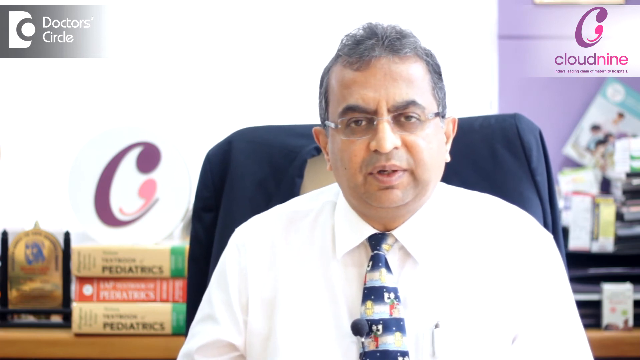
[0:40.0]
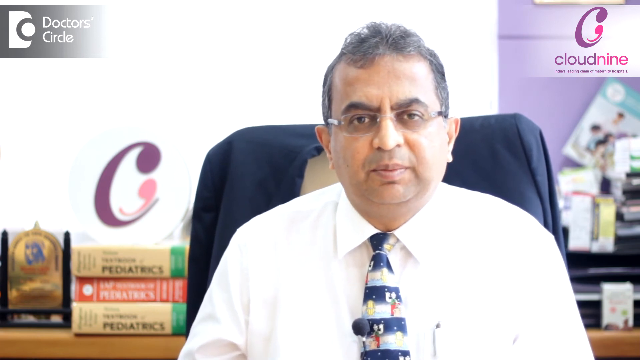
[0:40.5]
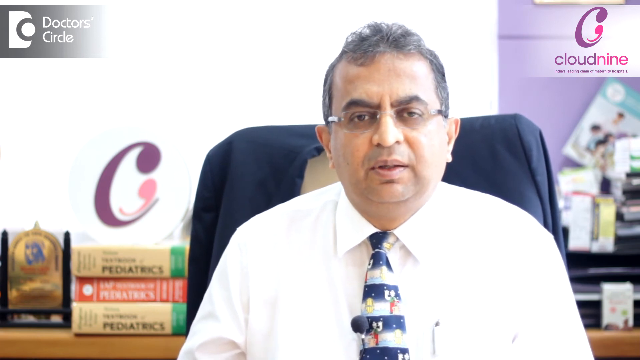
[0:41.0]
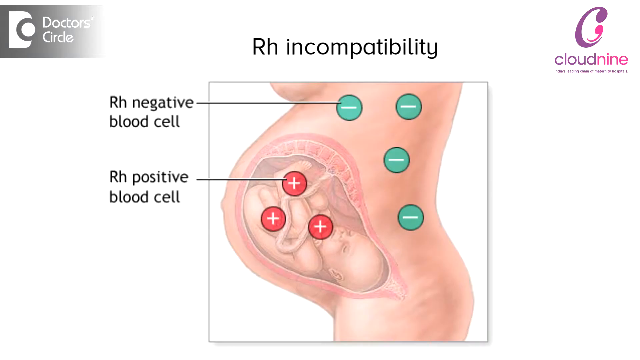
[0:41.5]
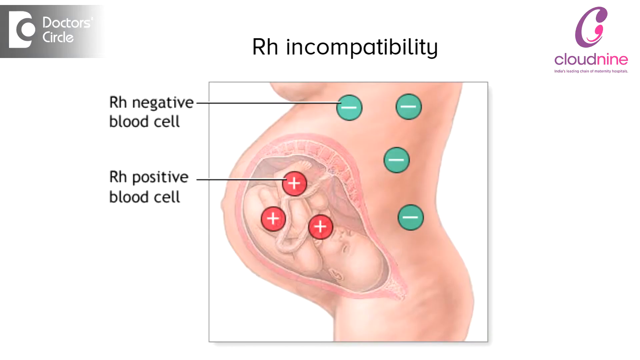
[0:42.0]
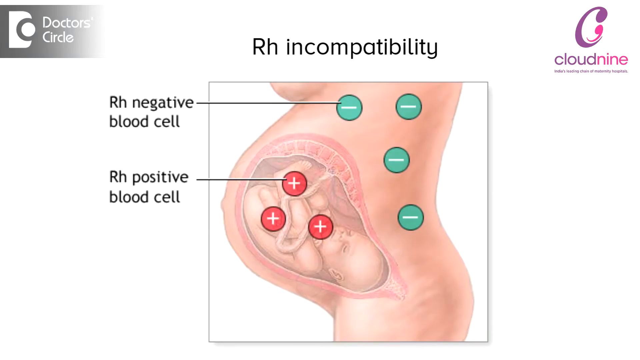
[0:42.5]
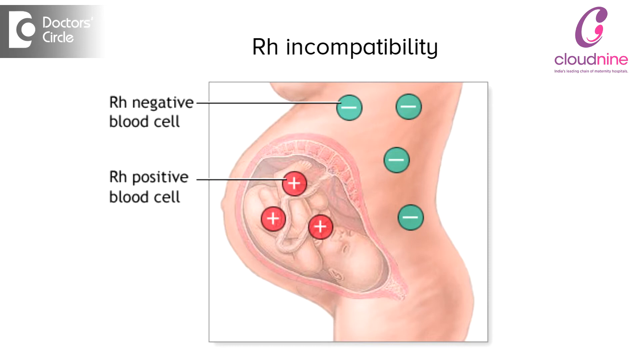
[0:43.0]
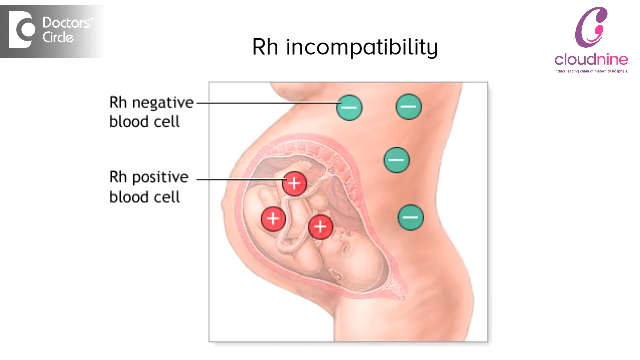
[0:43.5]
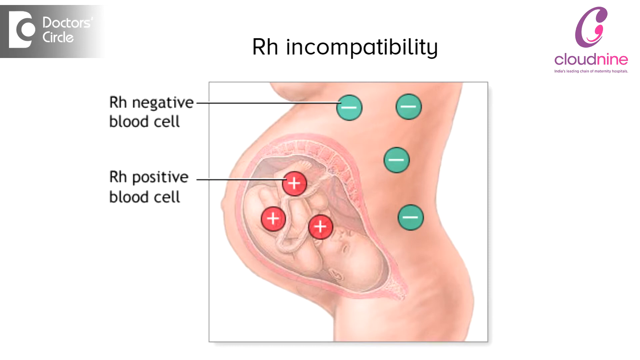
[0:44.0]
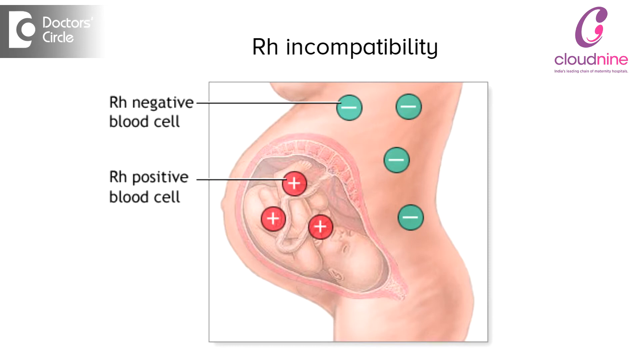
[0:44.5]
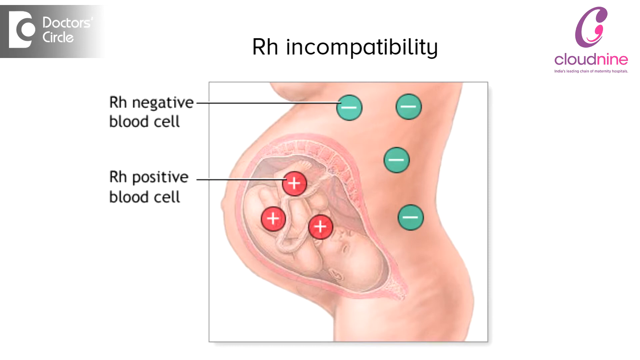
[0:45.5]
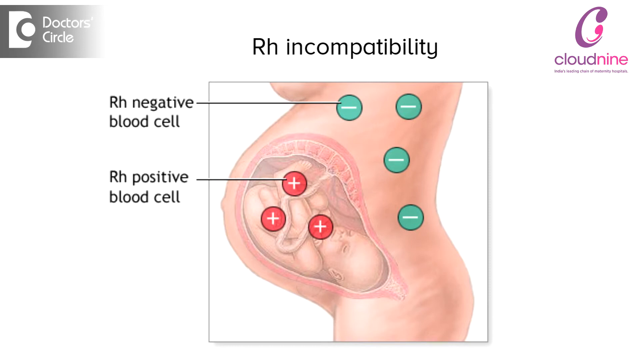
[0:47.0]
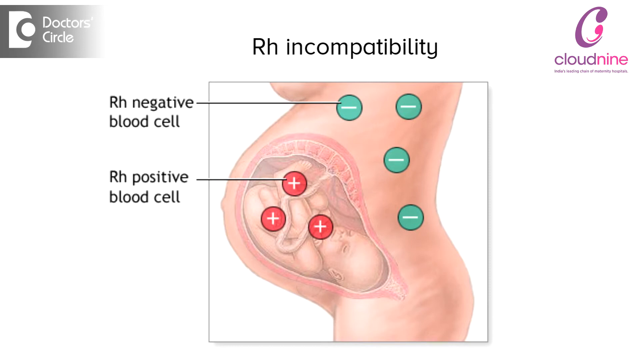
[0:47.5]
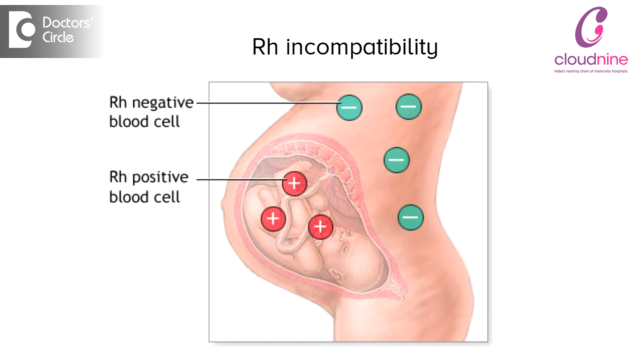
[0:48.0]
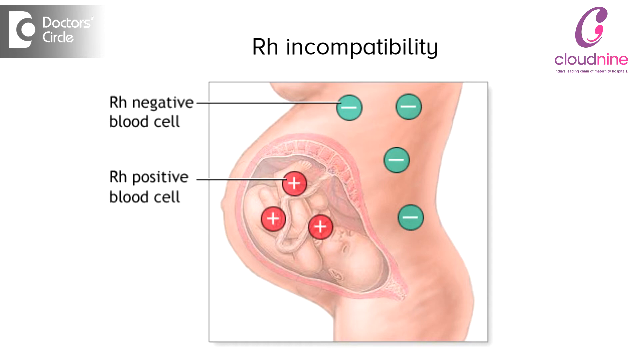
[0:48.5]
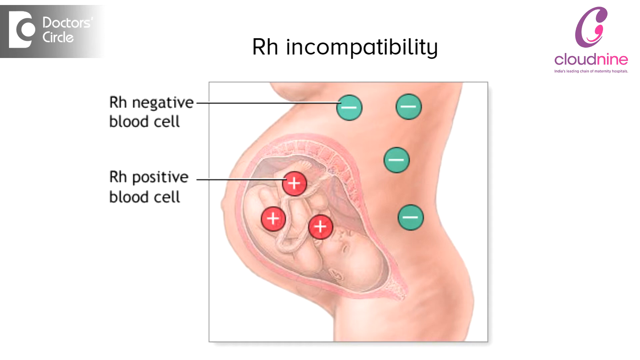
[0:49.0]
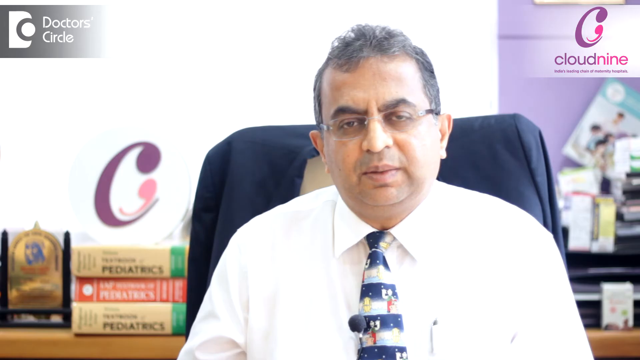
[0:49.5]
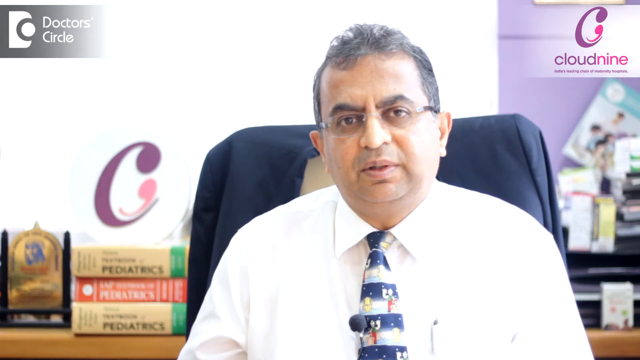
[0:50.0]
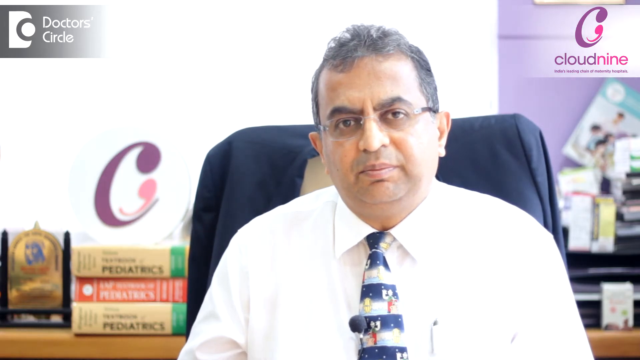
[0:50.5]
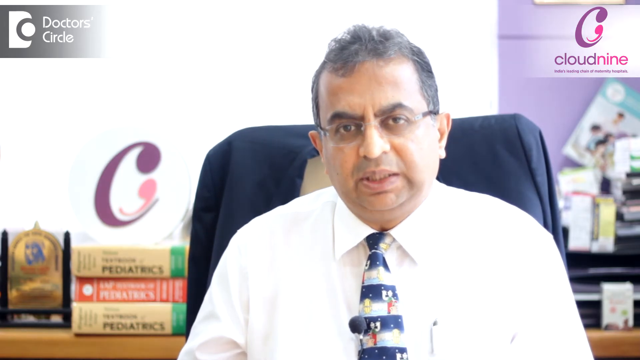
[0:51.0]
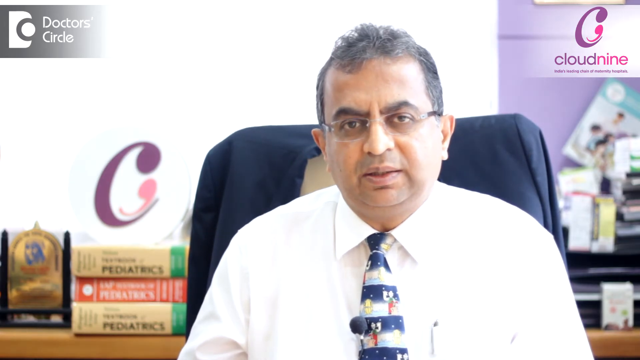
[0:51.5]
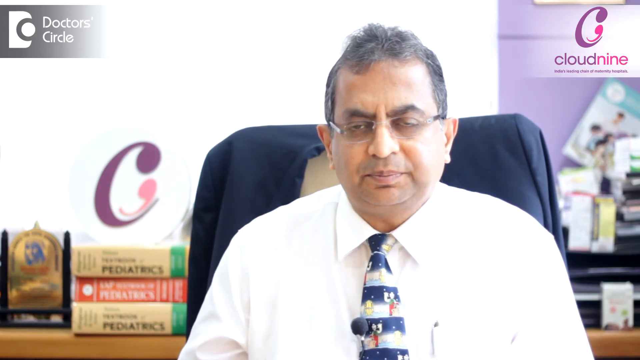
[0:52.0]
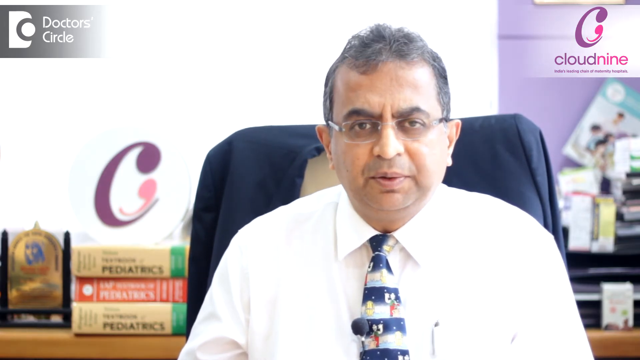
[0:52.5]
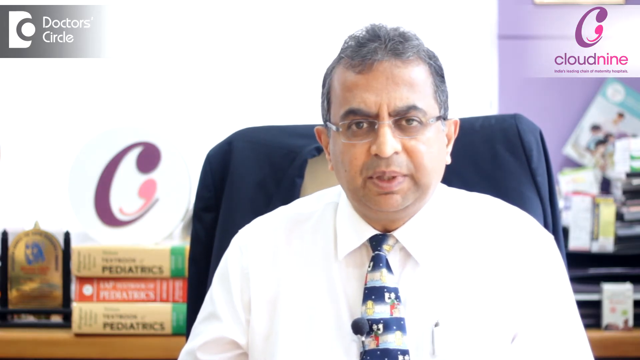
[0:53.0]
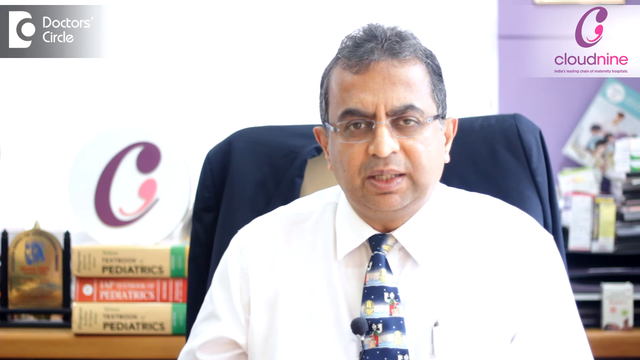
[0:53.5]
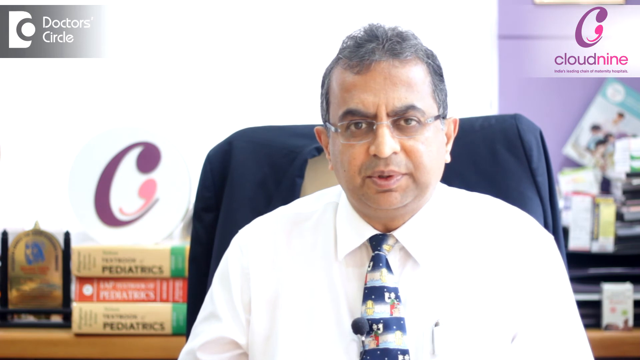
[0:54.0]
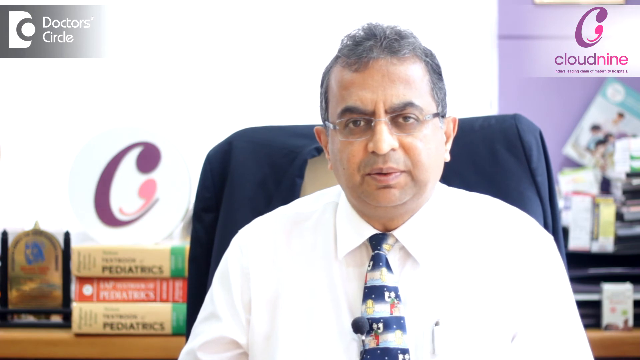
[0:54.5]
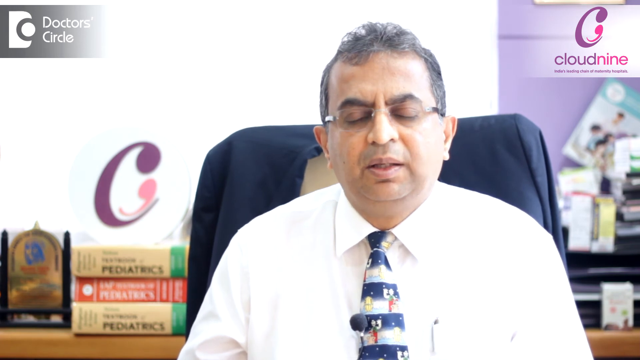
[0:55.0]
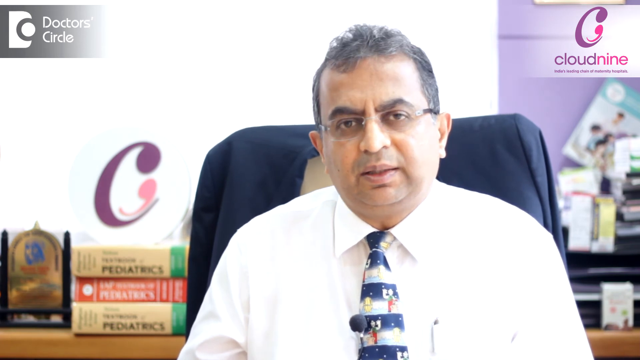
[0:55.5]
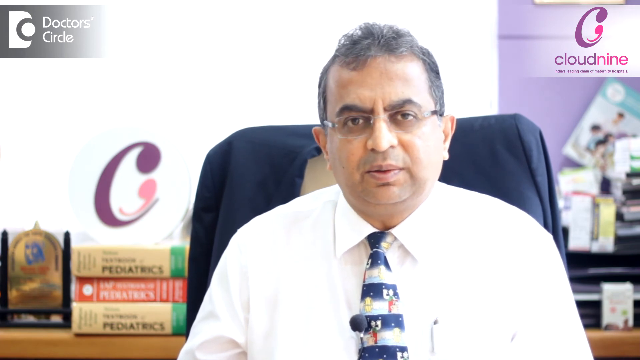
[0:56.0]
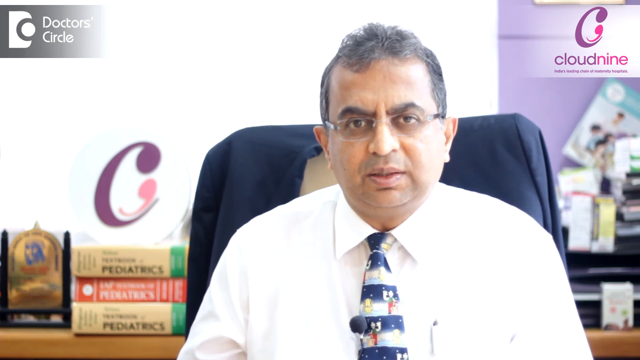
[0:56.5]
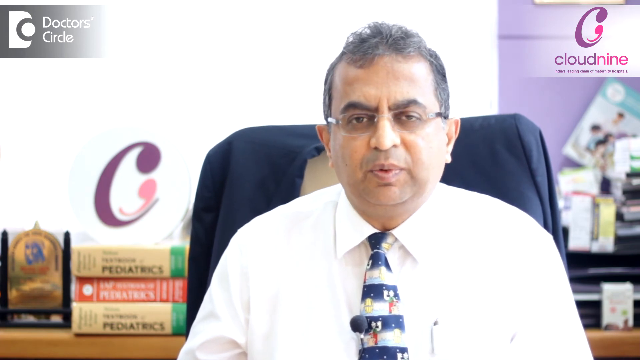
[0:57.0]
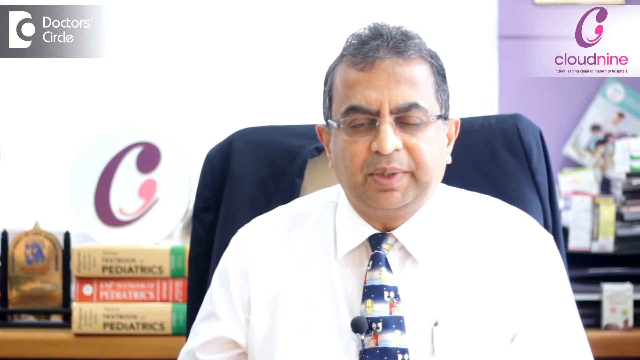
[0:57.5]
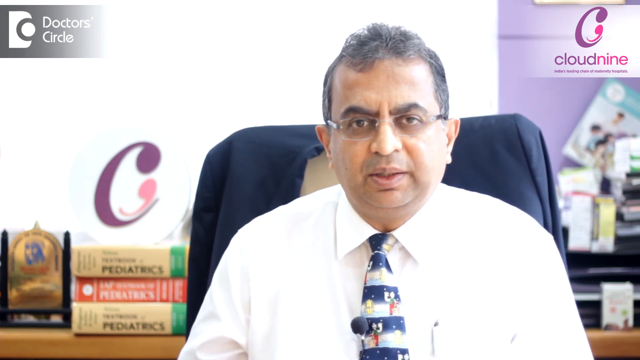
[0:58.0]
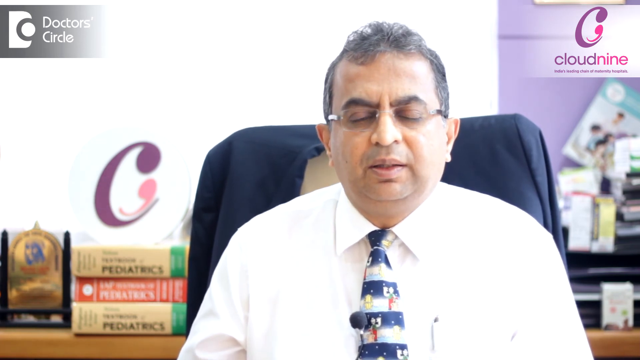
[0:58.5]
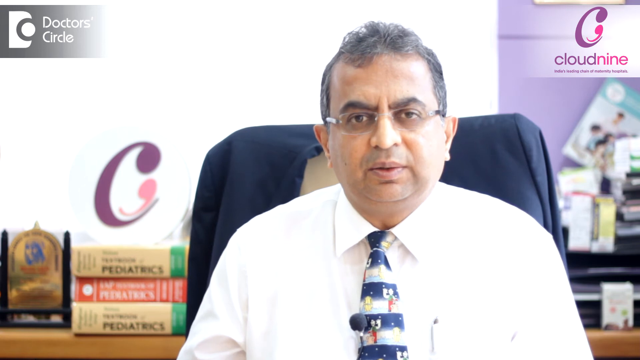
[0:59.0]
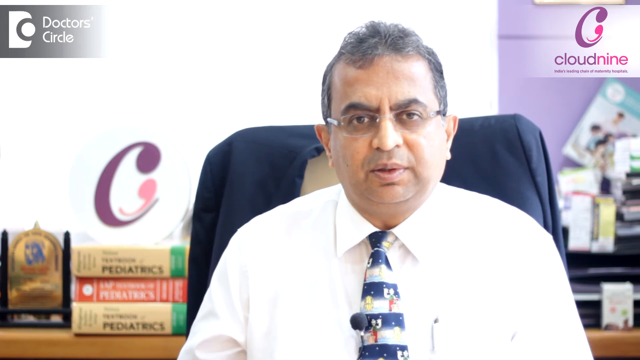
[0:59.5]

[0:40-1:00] On the right side of the frame is a gentleman of Indian descent in a white dress shirt and a tie, with his jacket visible on the back of his chair. In the right corner is a pink and purple logo reading "cloud nine" with a slogan under it, and at the top left is "doctor's circle" in gray and white; both stay put. In the background are some books and what looks like a gold award. He is speaking. A graphic comes up on screen with "rh incompatibility" in black at the top. On the left, in black, it reads "rh negative blood cell" and under that "rh positive blood cell." To the right are green and red circles; the green ones have a negative sign and the red ones a positive sign. A black line is drawn from "rh negative blood cell" to the green circles with the minus sign, and another black line comes from "rh positive blood cell" to the red circles. The illustration looks like something from a med textbook: an infant inside a mother's womb, curled up in the fetal position, with the mother's uterus and the naked body of the illustrated figure visible. The video stays on this, then cuts back to the gentleman, who keeps talking while looking at the camera, with lots of blinking.